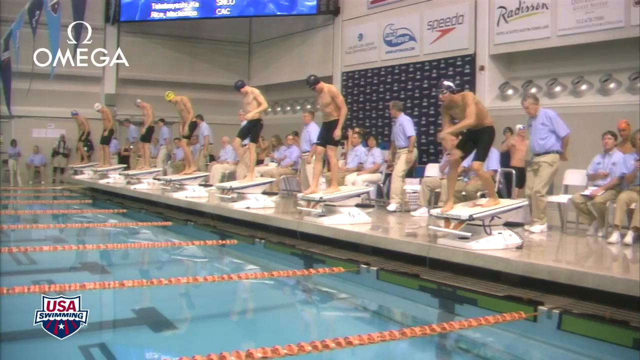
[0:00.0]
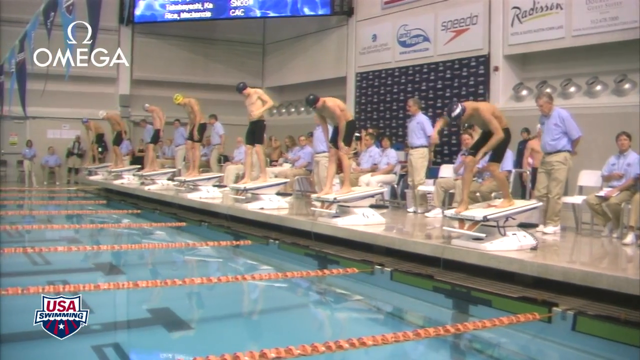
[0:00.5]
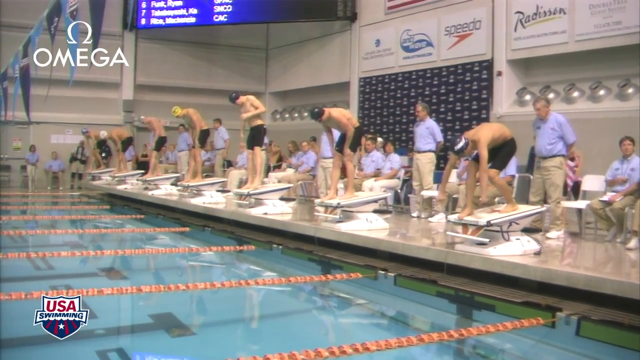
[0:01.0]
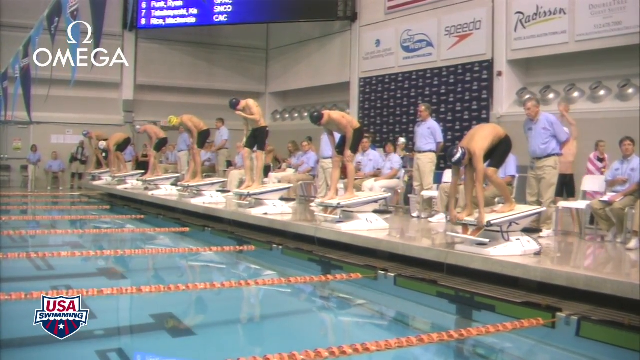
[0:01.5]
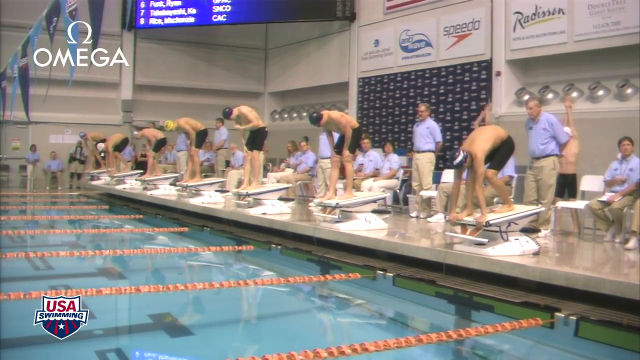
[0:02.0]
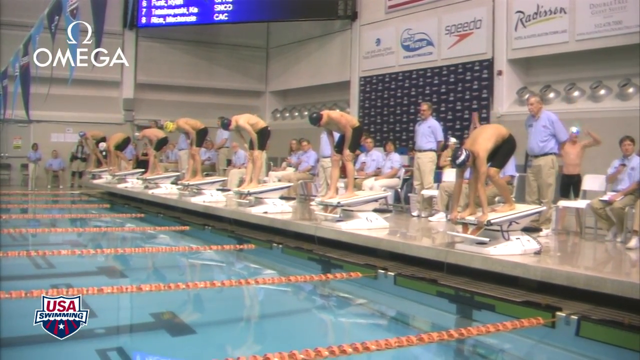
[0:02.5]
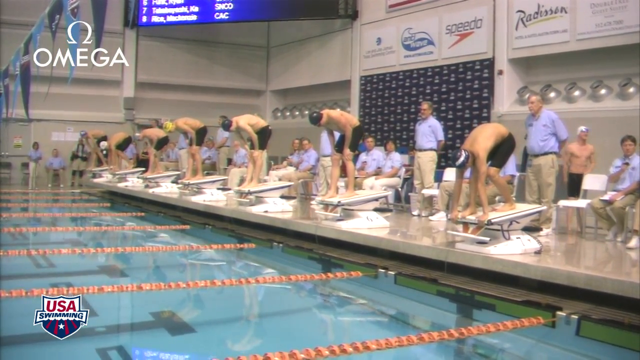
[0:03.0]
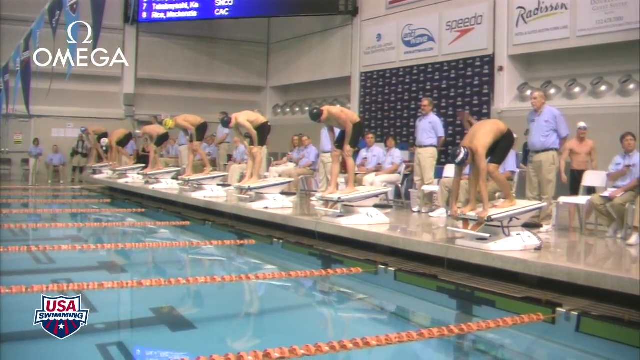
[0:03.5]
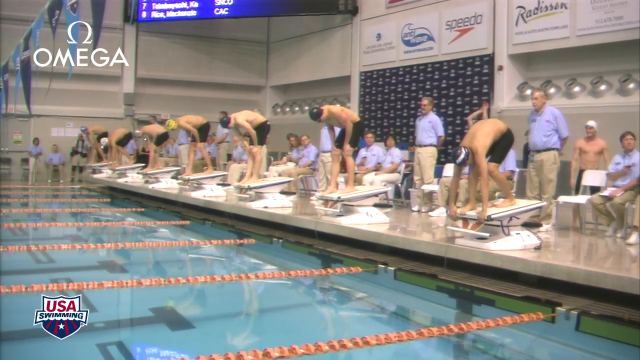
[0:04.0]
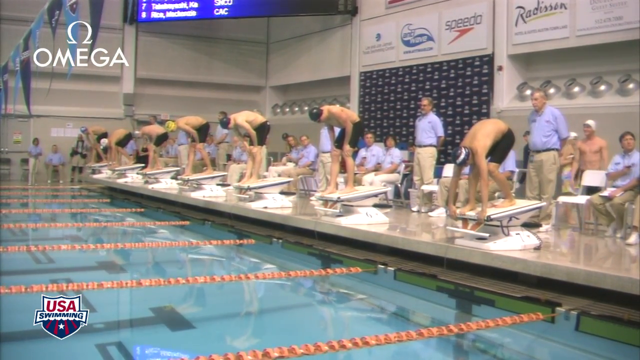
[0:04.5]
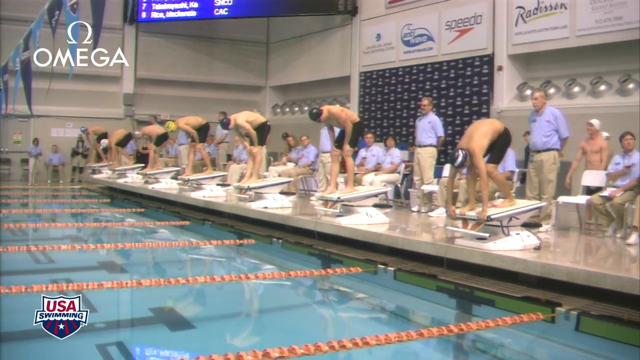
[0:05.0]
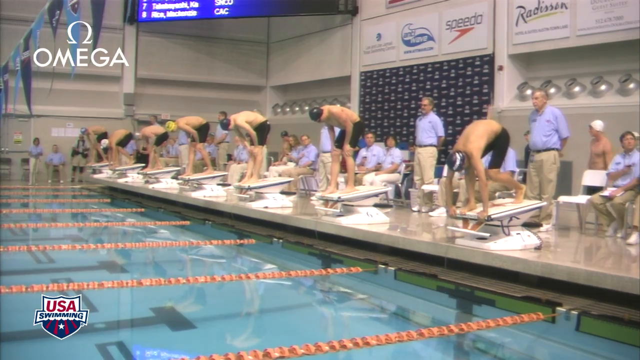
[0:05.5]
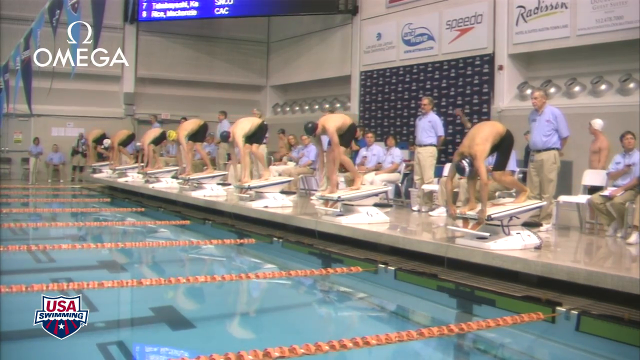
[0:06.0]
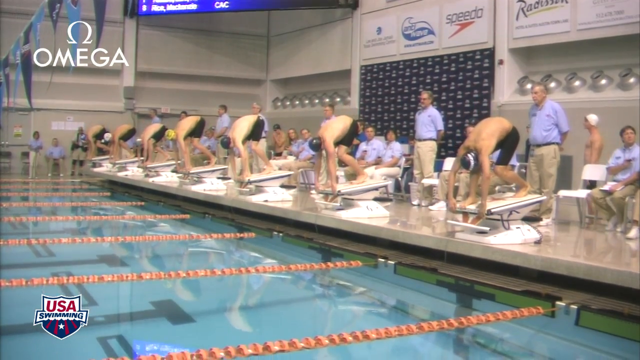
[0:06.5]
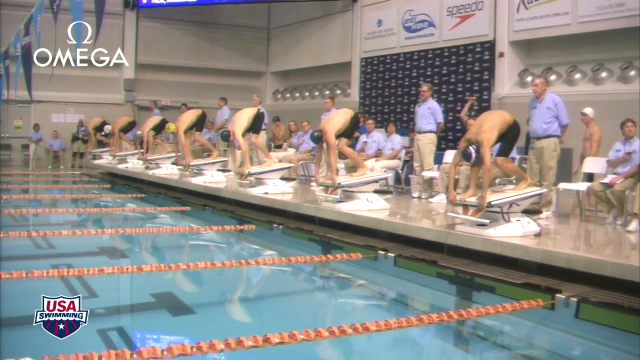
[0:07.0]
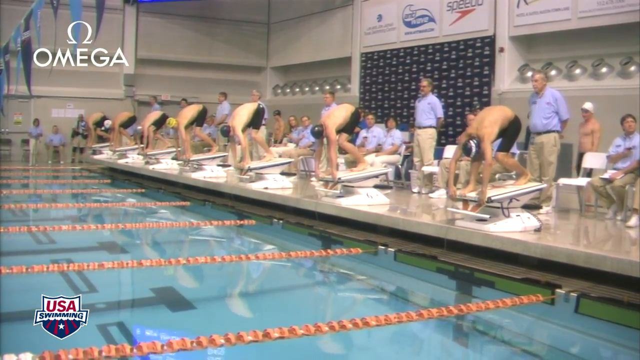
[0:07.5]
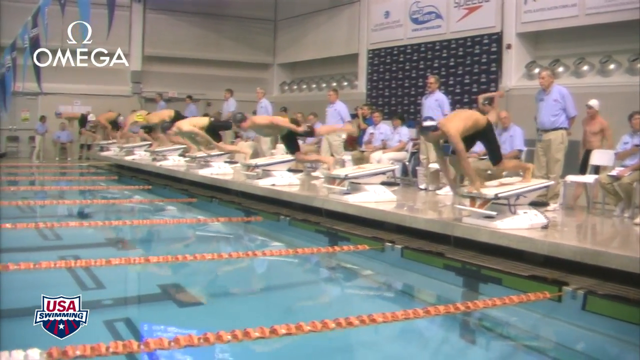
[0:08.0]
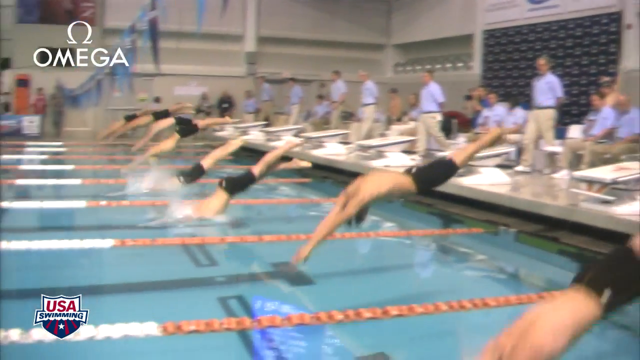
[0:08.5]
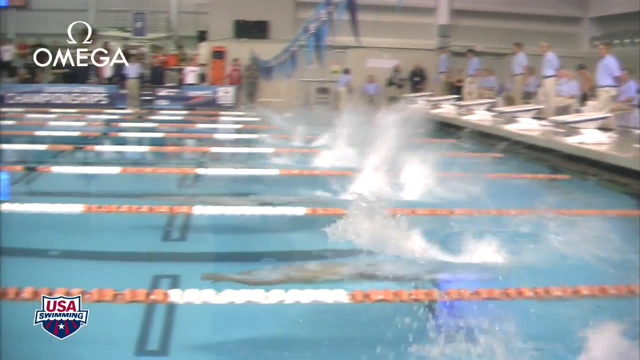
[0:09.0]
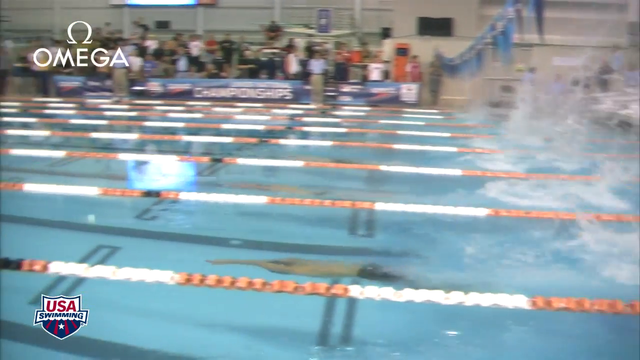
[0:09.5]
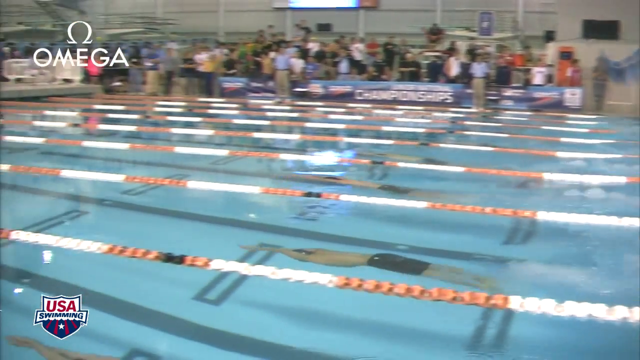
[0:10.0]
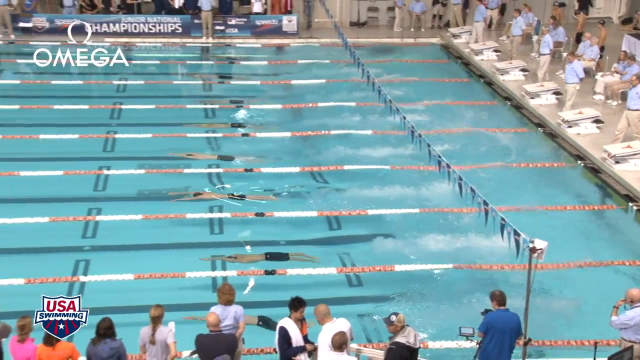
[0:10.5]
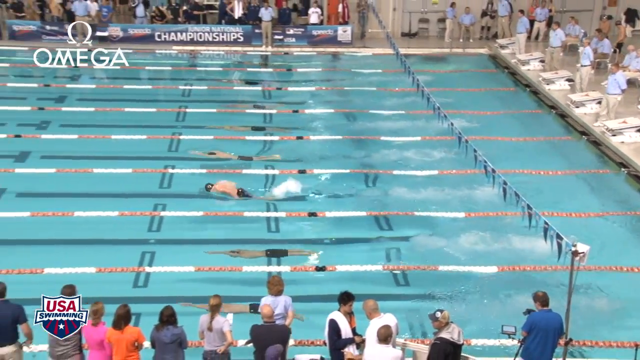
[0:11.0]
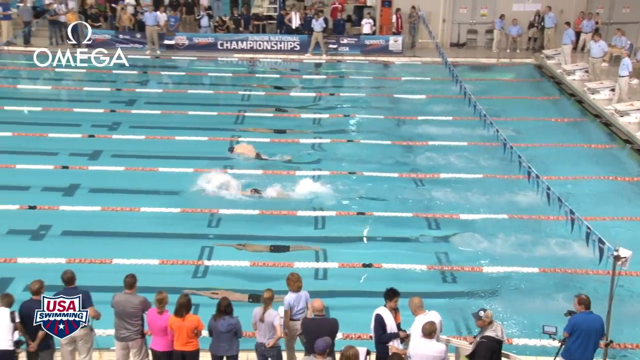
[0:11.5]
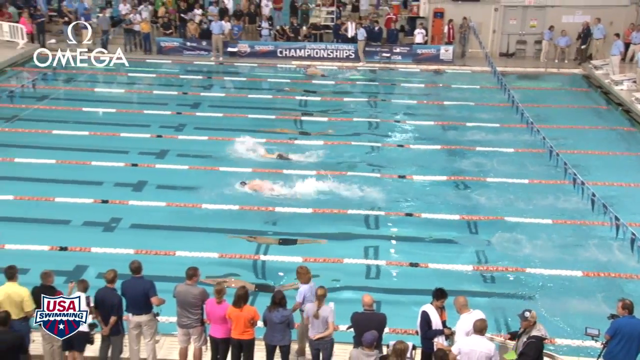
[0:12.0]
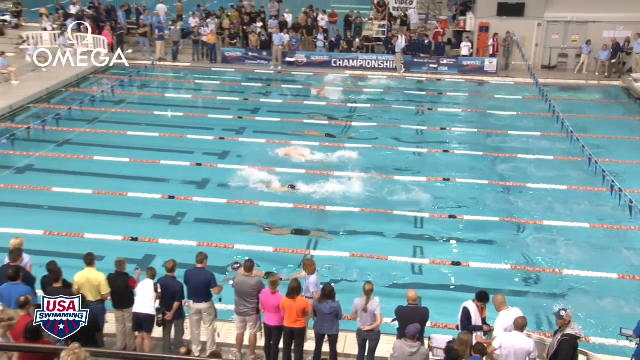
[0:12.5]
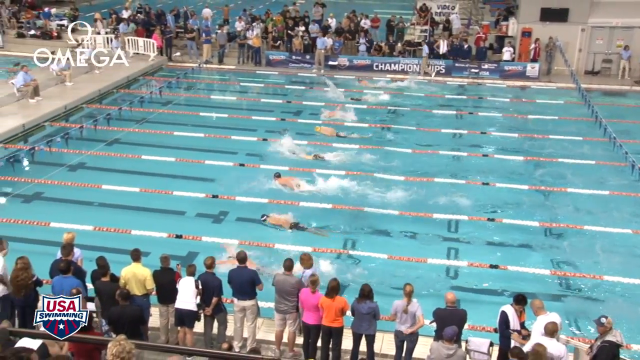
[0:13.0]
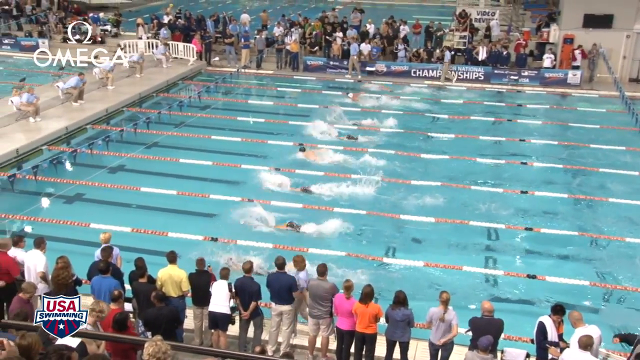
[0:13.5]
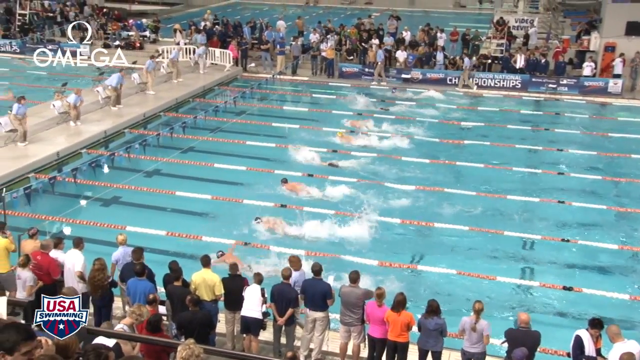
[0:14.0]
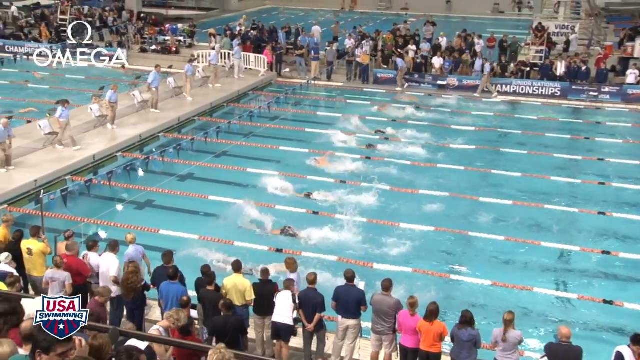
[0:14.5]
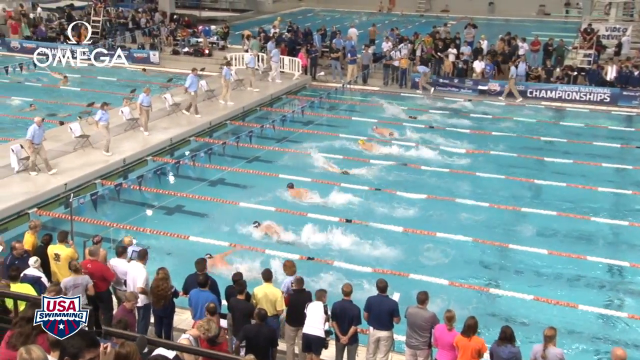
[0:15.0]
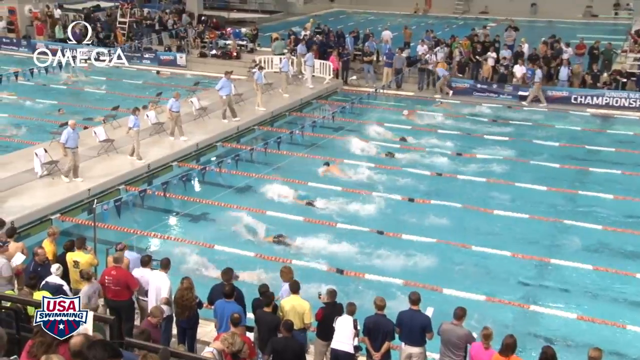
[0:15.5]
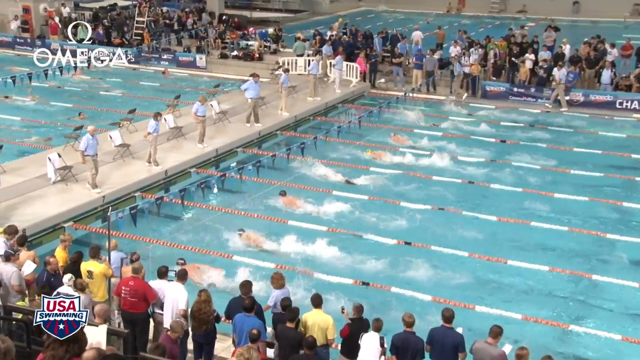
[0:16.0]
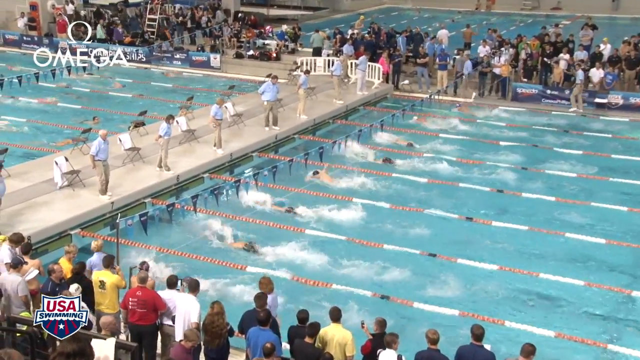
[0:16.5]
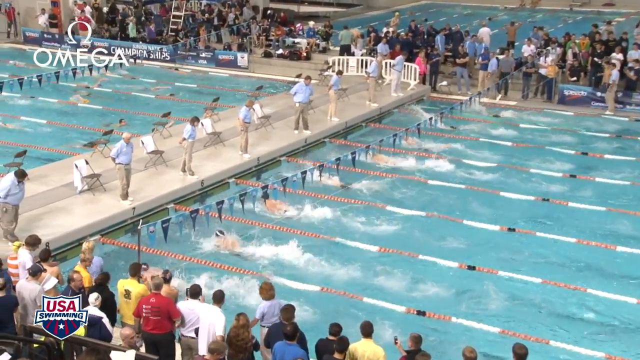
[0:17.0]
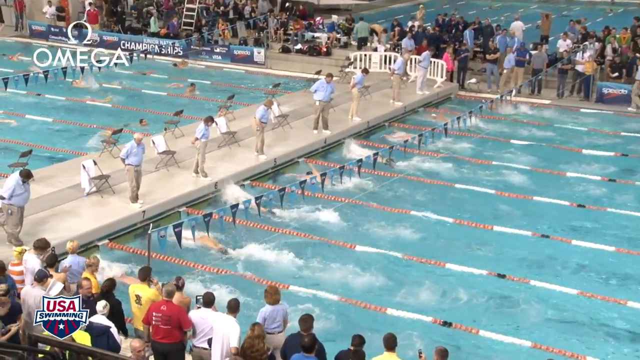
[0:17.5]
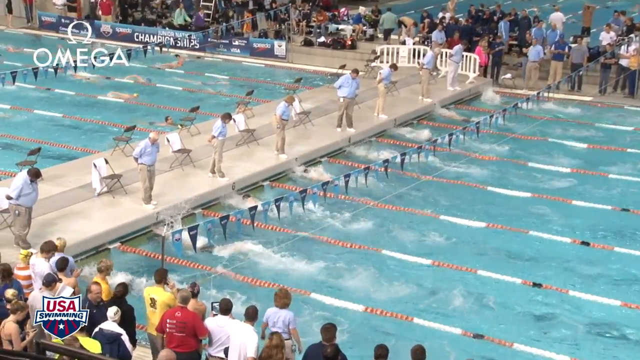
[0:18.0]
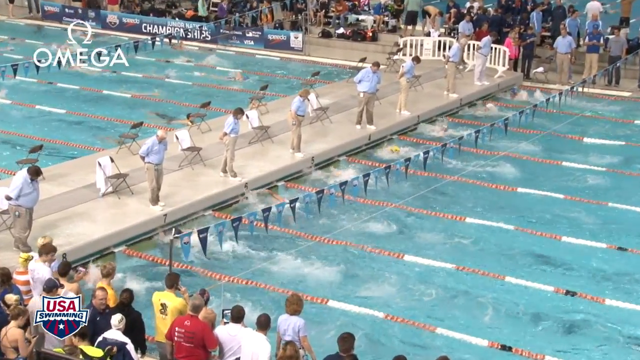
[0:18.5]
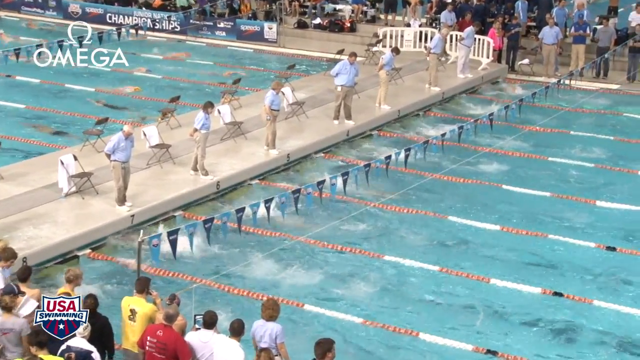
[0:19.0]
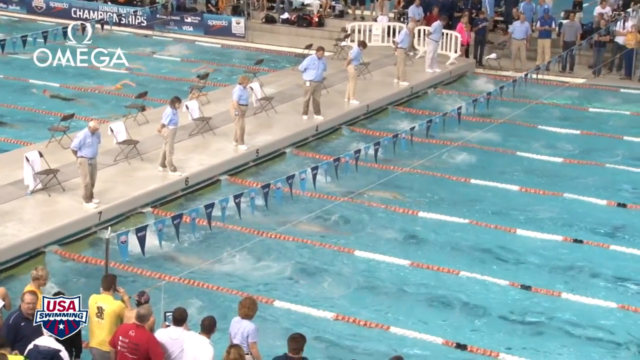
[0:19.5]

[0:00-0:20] Individuals line up for a swim-off, standing on podium-type platforms. Behind them are what seem to be referees who seem to be older, a few looking like they are in their 50s; they wear blue button-up shirts with burgundy pants and what look to be white sneakers. Other people warm up in the background, and there is a large screen in the back. The swimmers get ready, dip down, and jump into the water with a big splash. The lanes are separated by red and white dividers, and there are other people on the other side of the pool. The view then switches to an overhead shot: people are lined up on the side of the pool area looking on, and some pool-boy-type people are not paying much attention to that area and seem to be talking amongst each other. The swimmers move to one end and head to the next.